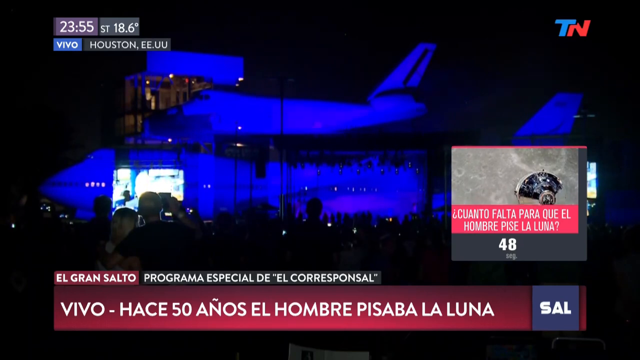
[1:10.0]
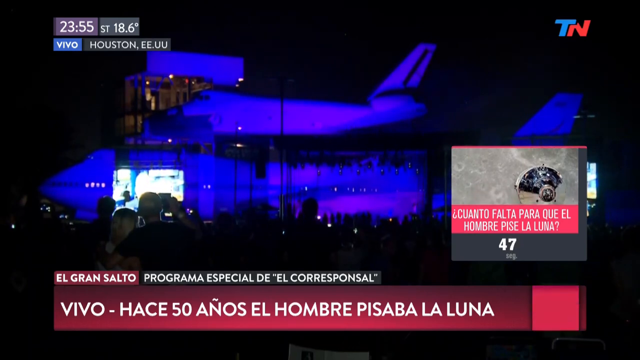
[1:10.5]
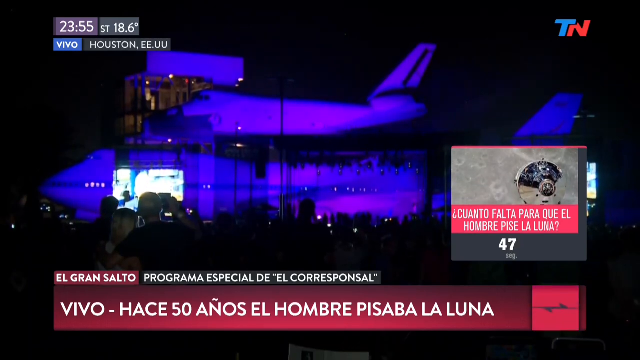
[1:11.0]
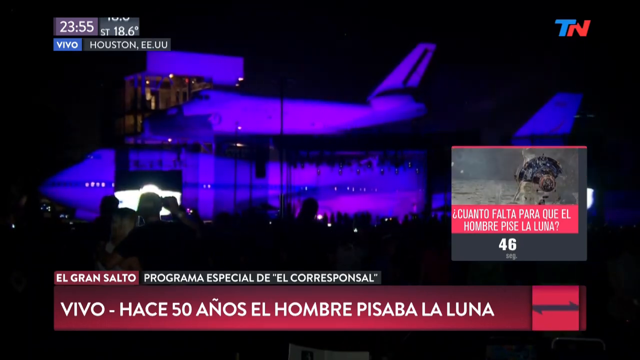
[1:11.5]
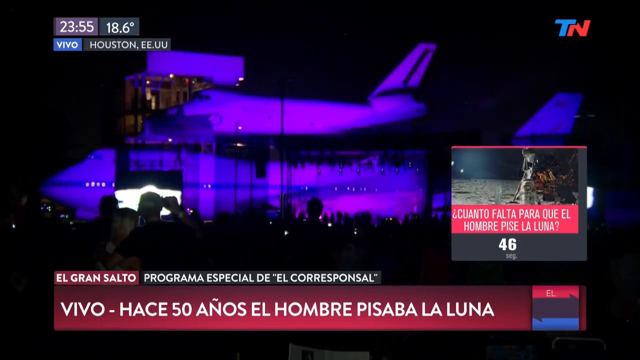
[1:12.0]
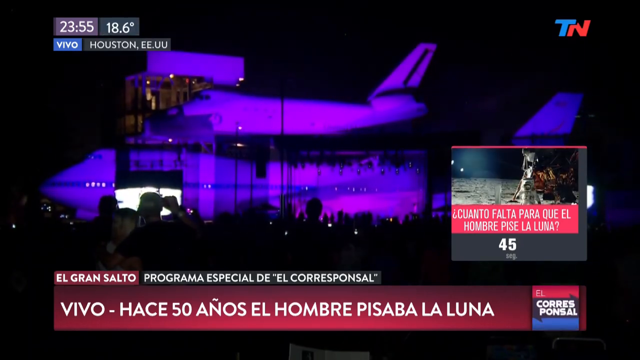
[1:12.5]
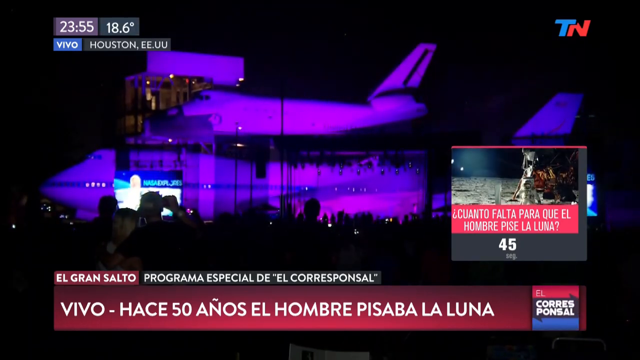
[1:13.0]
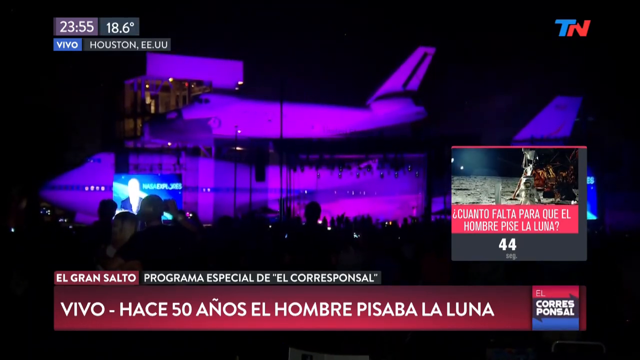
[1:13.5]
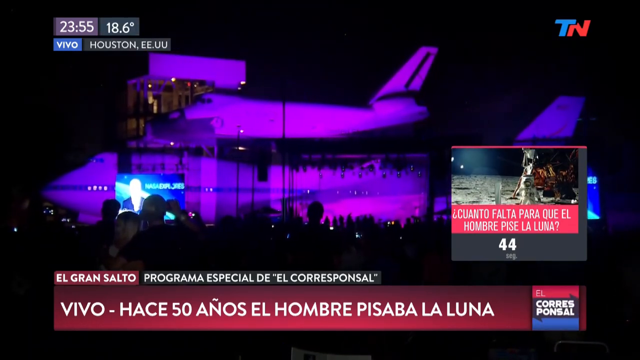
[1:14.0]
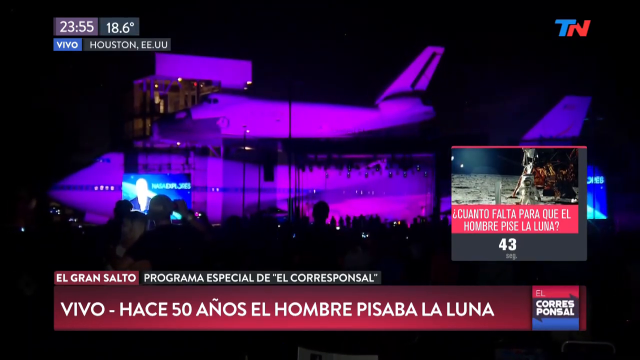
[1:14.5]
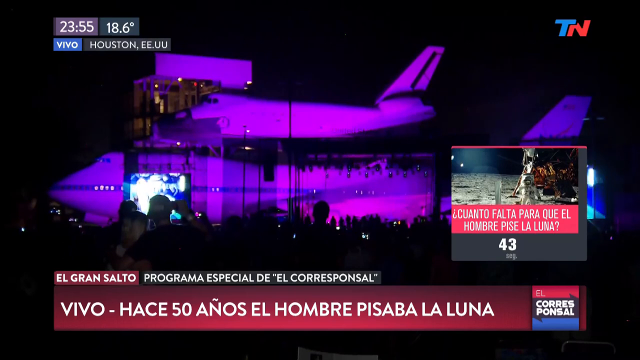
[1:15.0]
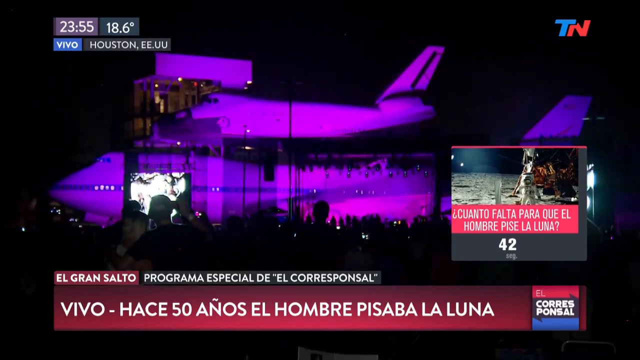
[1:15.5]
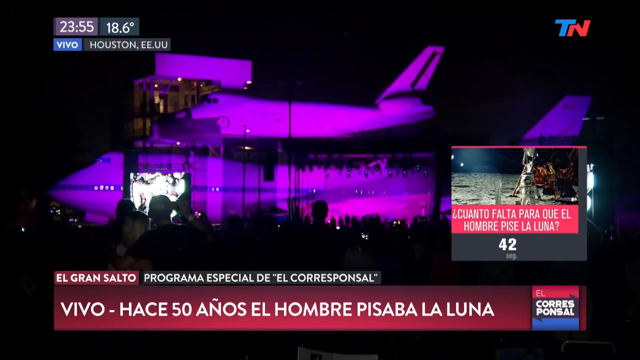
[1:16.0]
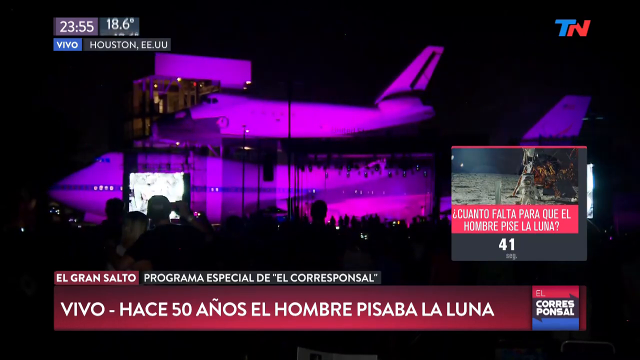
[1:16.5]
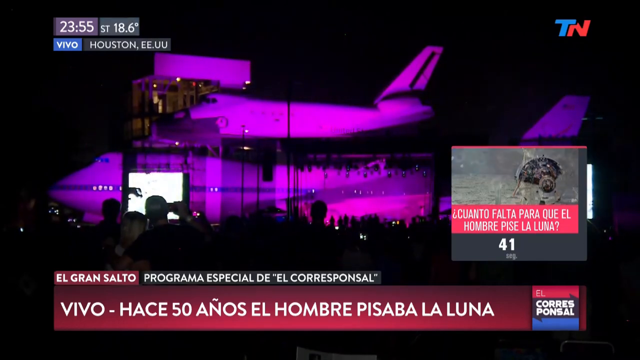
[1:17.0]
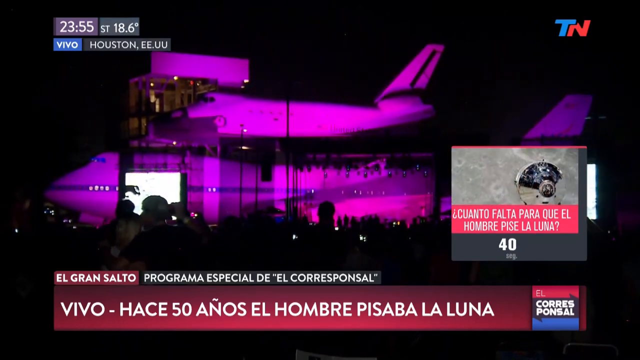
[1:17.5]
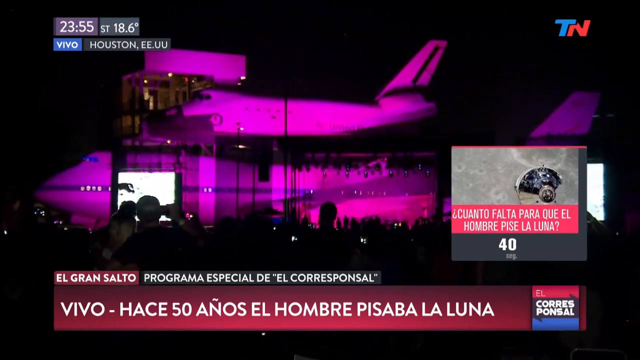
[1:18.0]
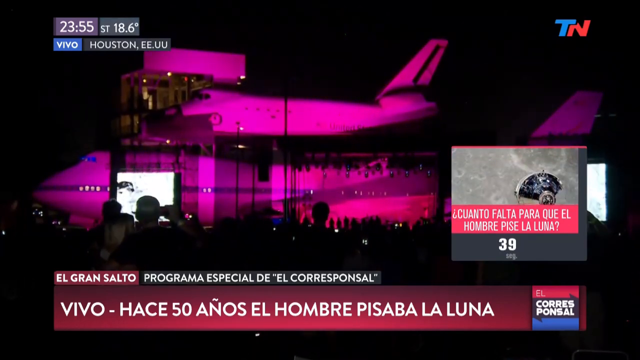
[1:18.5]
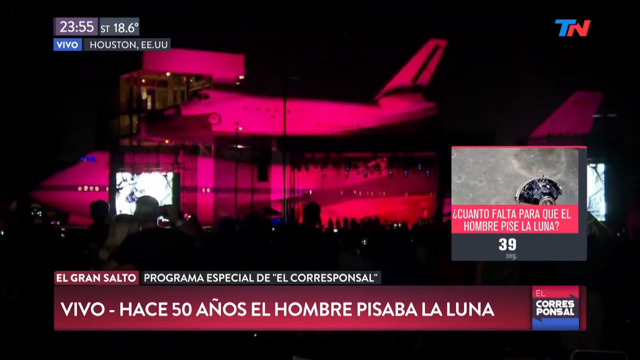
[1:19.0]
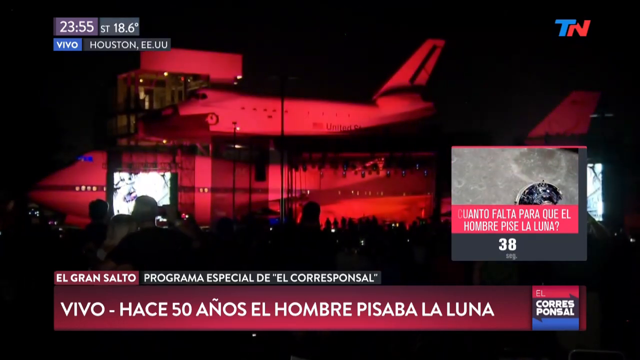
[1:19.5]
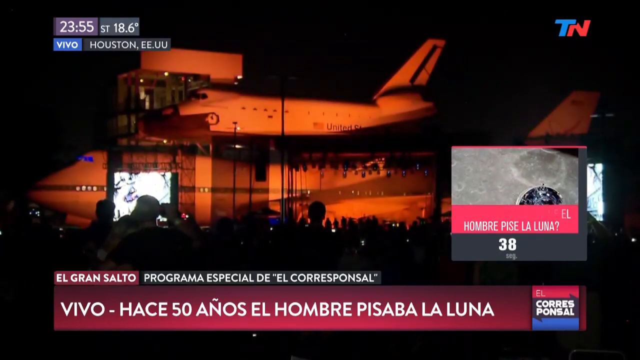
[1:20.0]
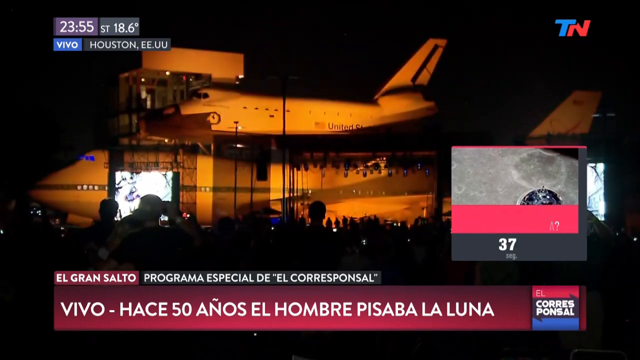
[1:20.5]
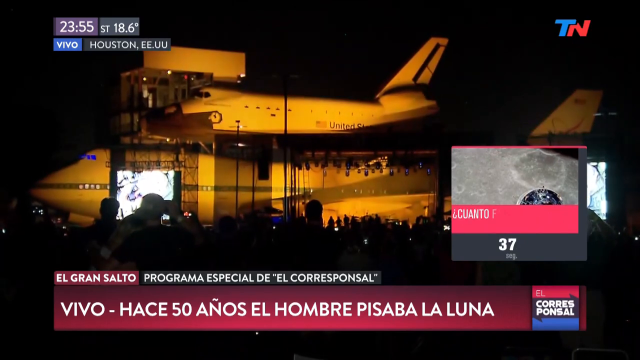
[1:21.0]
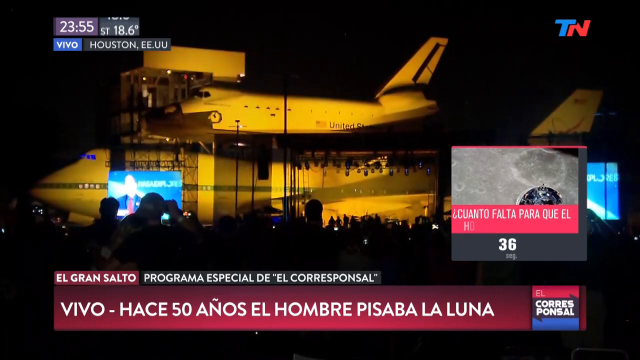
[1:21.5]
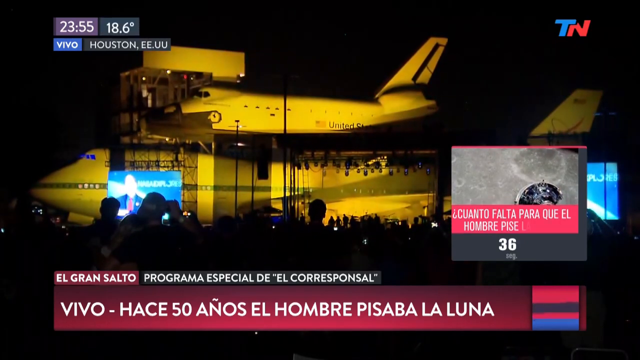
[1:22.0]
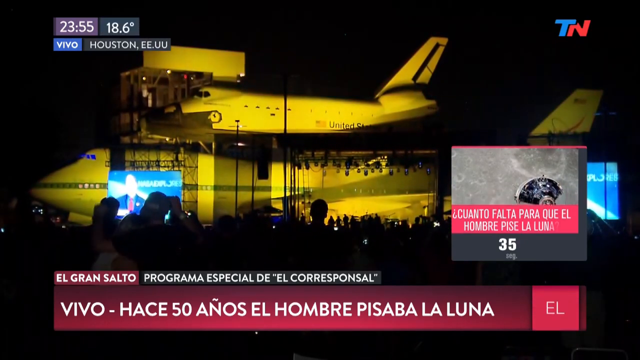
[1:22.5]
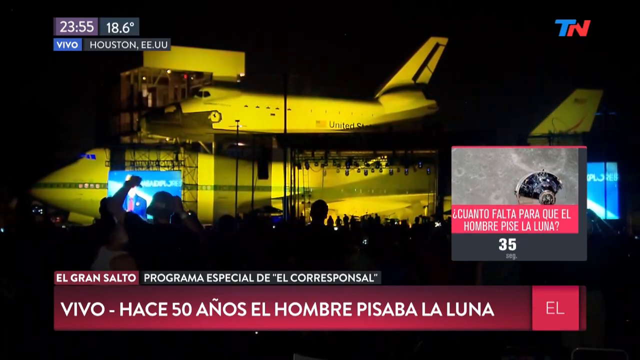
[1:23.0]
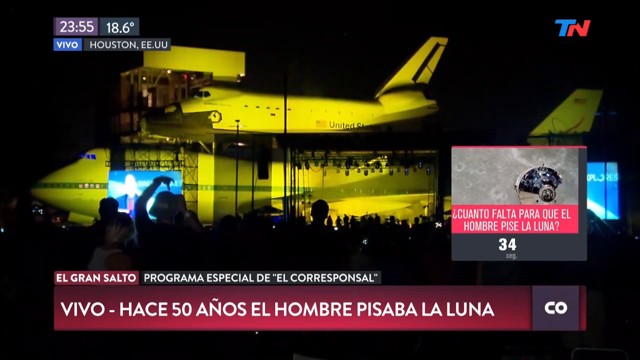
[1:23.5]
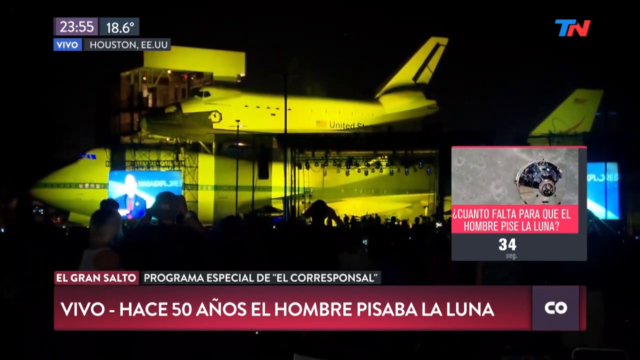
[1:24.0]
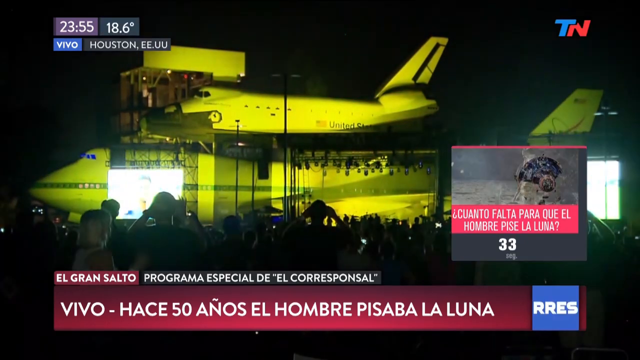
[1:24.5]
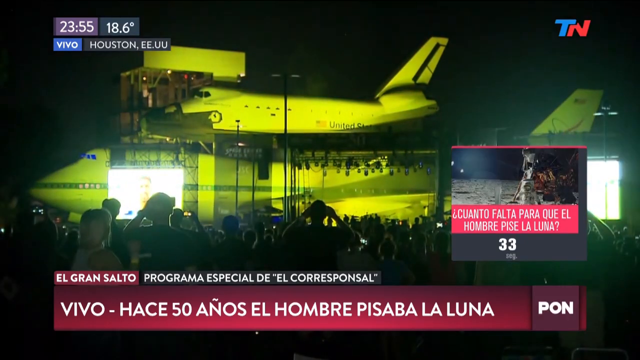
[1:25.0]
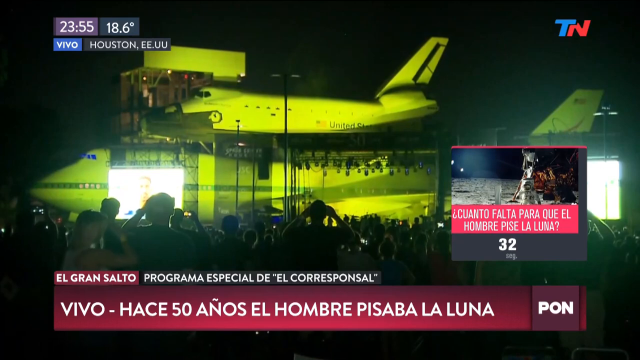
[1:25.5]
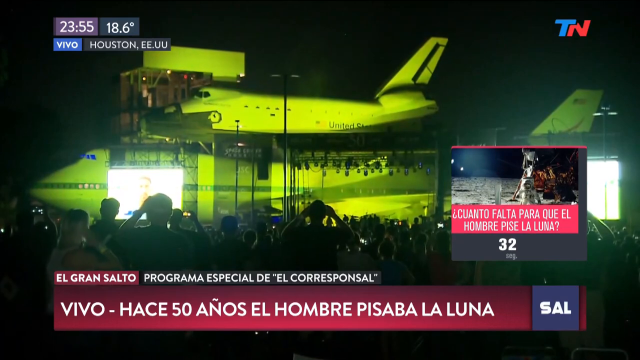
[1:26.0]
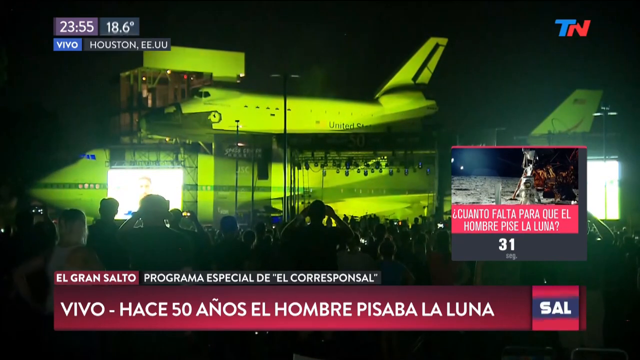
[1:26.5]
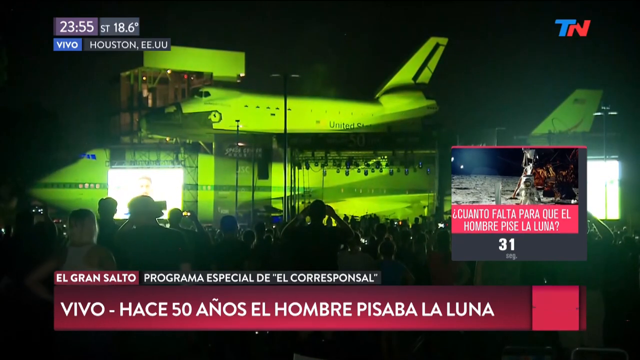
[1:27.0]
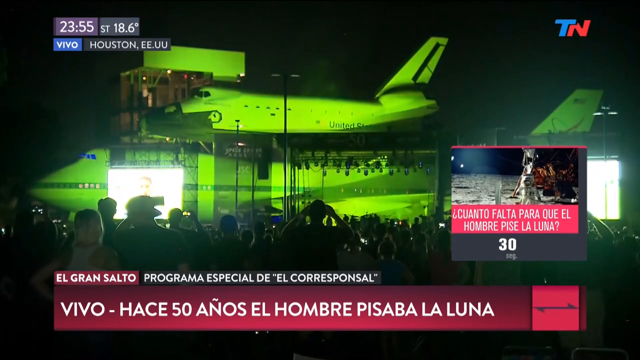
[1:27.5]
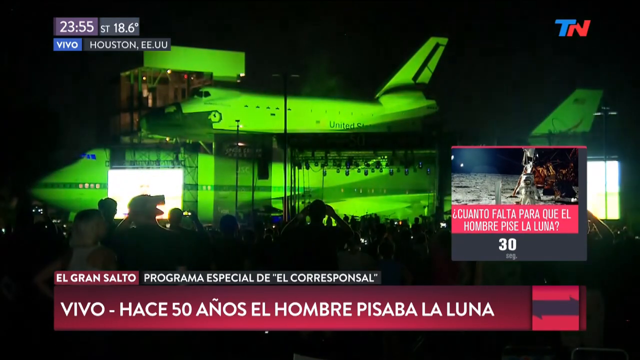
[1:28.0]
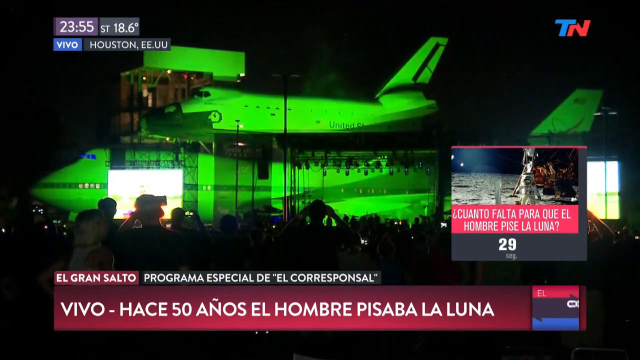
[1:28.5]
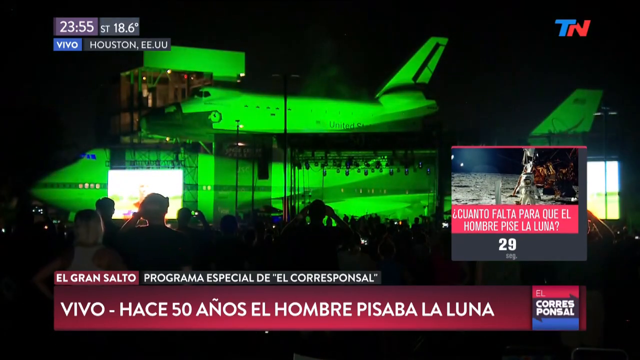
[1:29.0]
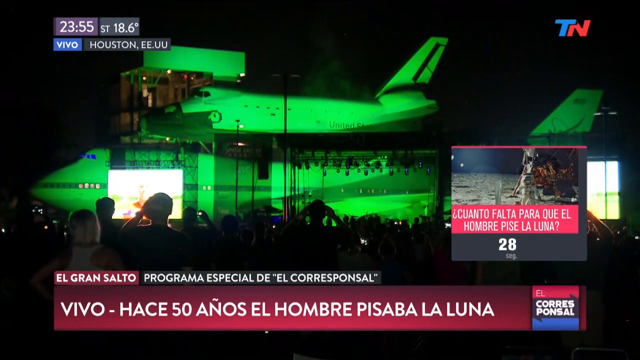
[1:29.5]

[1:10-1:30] The countdown shows 45 seconds to go. People are looking at the aircraft, and many are hugging and videotaping. It is 11:55 at night. Hundreds of people, possibly a thousand, are waiting and watching with their phones out. On-screen text says Houston, and the broadcast seems to be from a Spanish news channel.